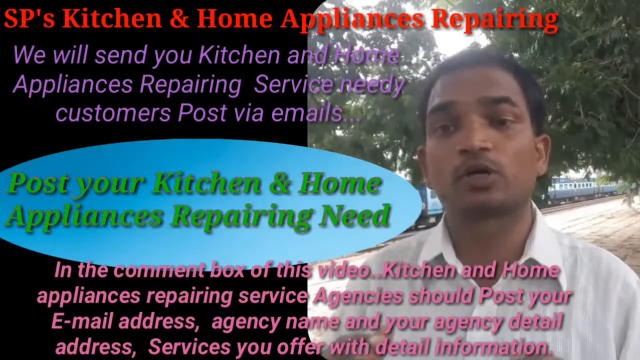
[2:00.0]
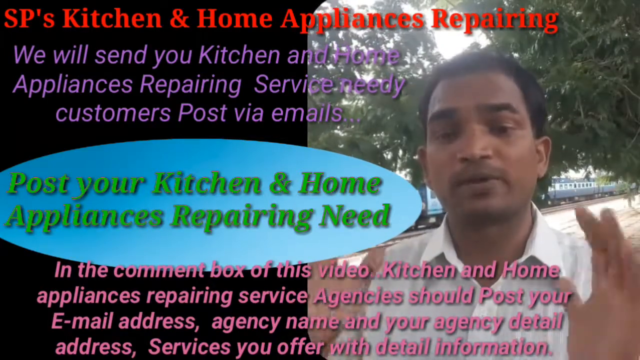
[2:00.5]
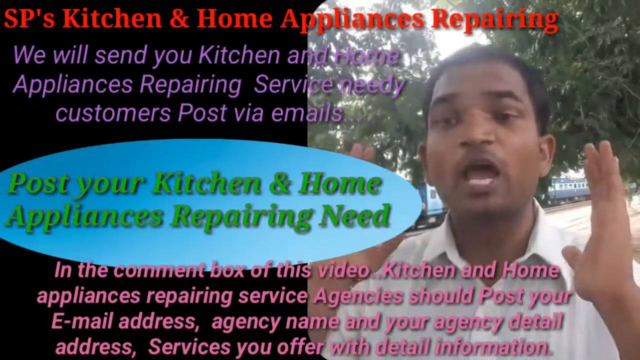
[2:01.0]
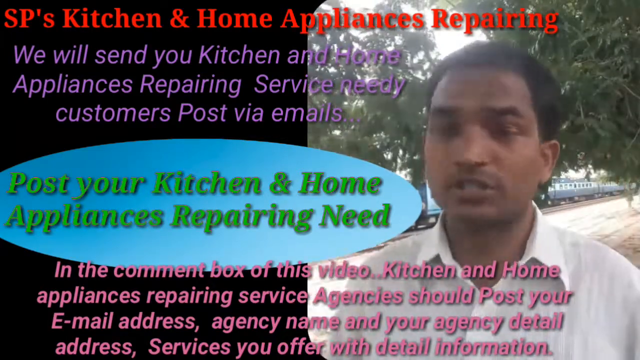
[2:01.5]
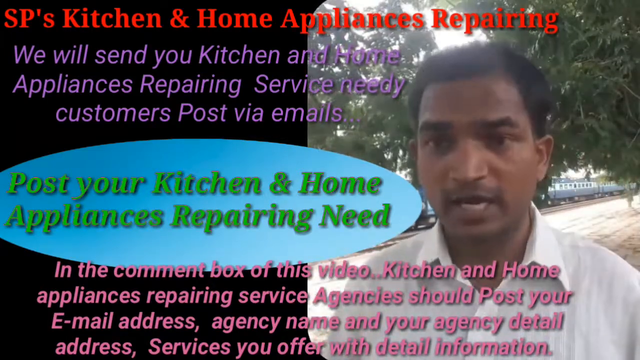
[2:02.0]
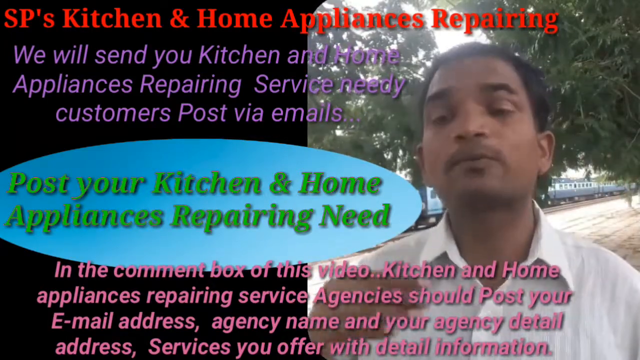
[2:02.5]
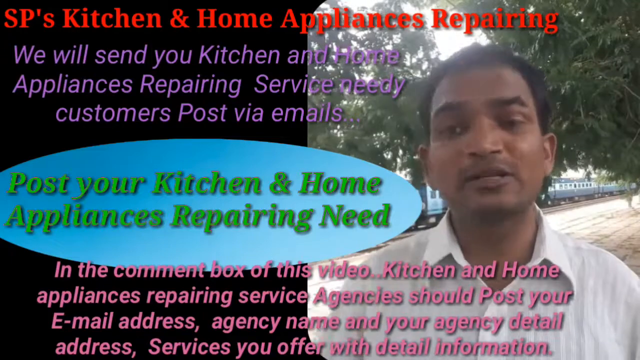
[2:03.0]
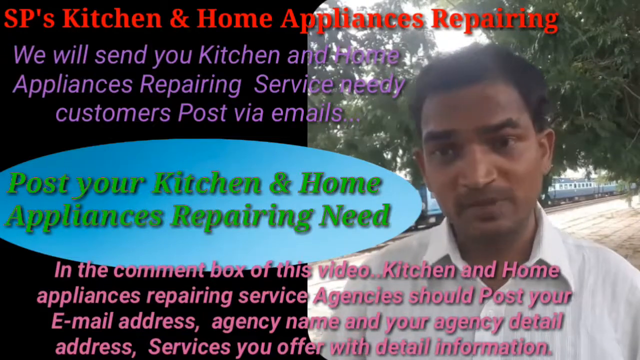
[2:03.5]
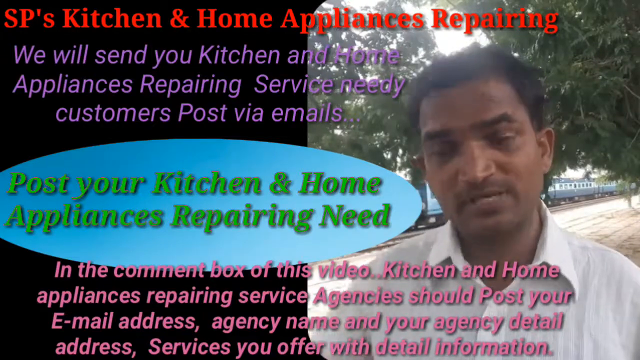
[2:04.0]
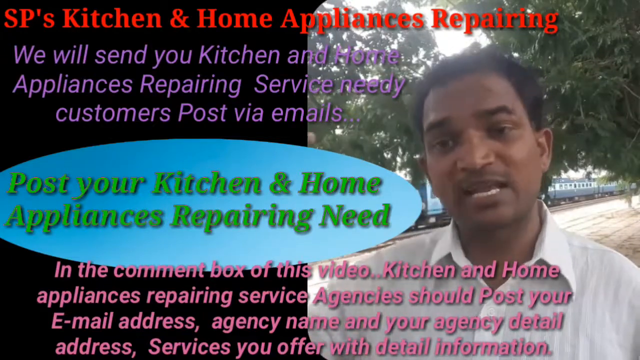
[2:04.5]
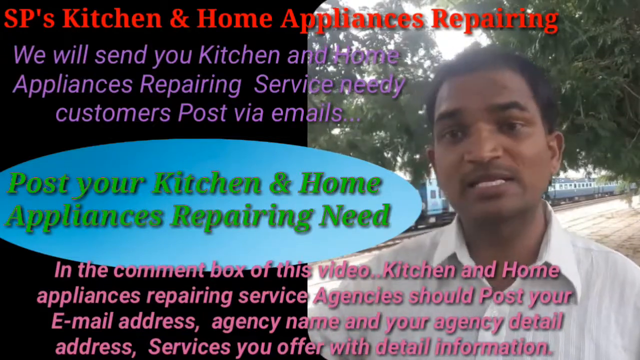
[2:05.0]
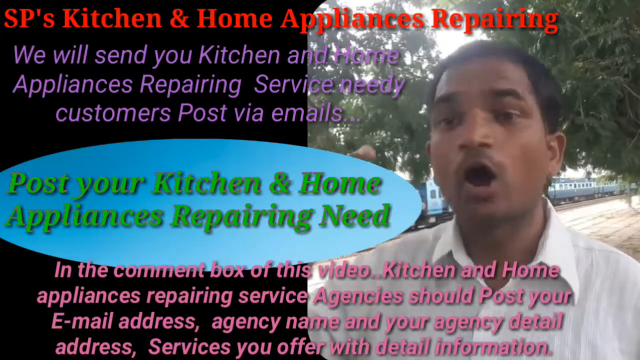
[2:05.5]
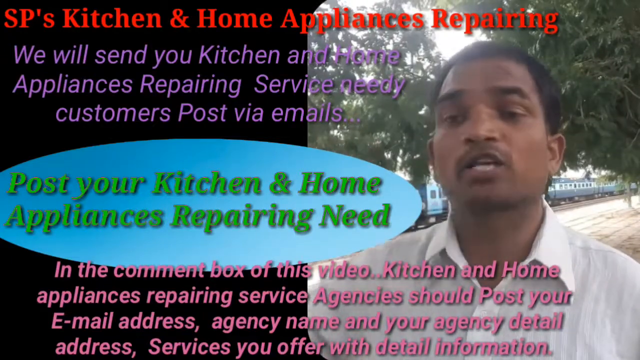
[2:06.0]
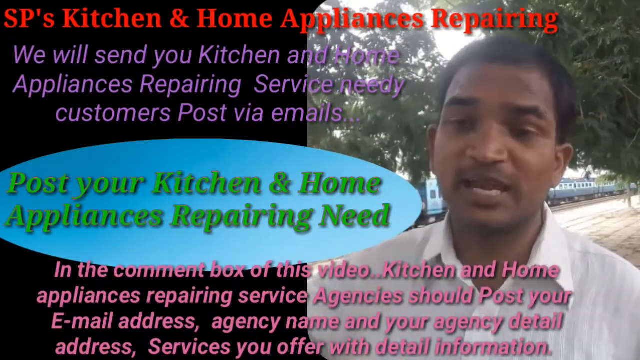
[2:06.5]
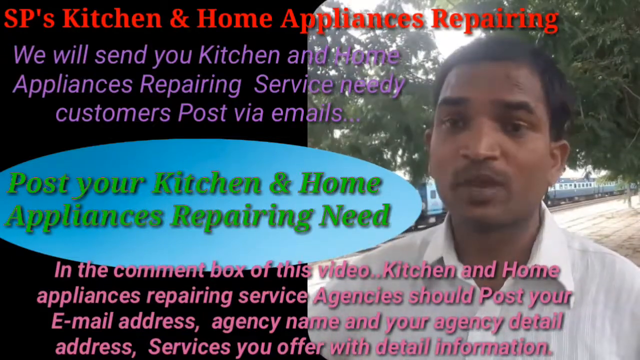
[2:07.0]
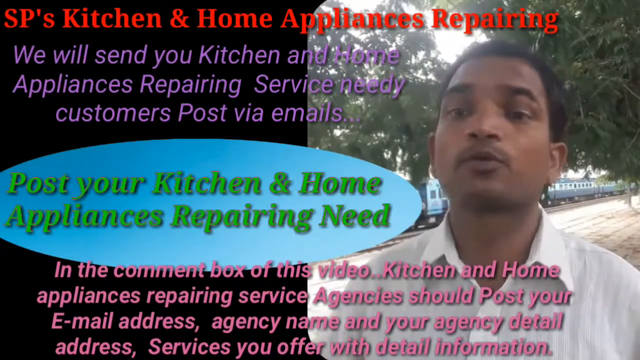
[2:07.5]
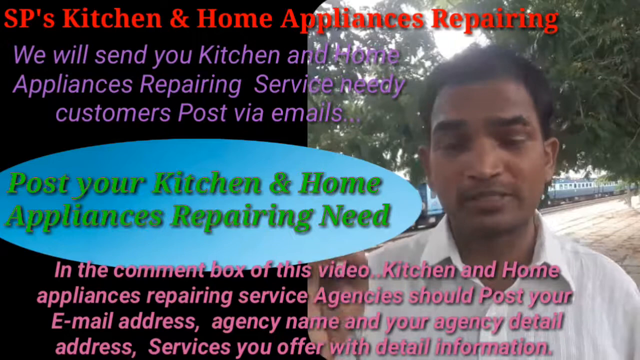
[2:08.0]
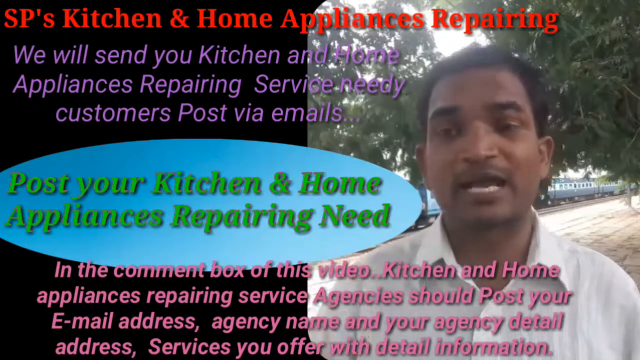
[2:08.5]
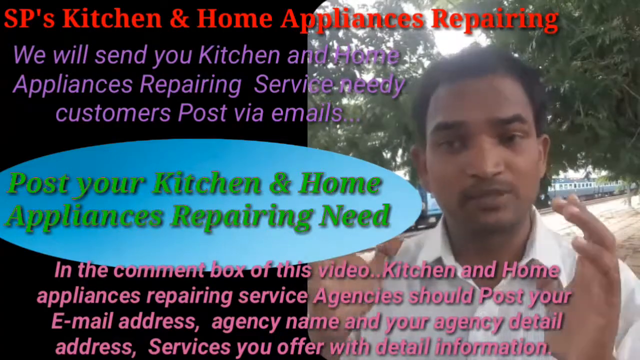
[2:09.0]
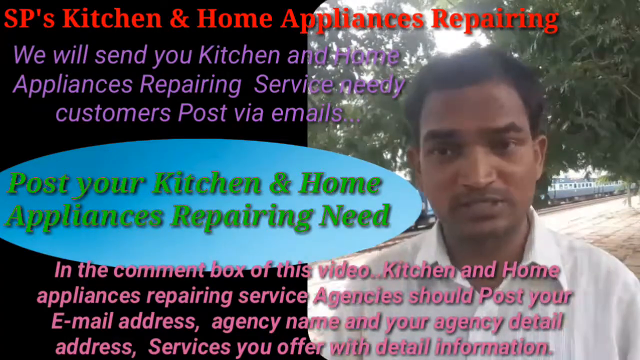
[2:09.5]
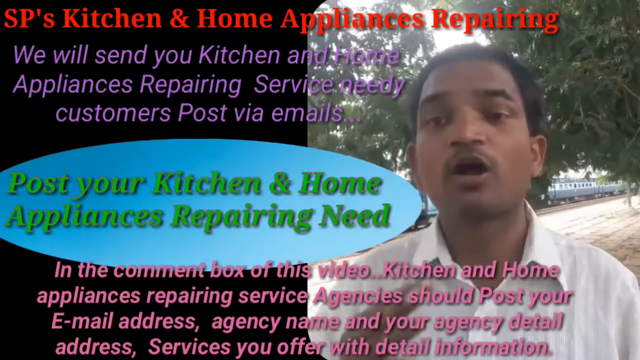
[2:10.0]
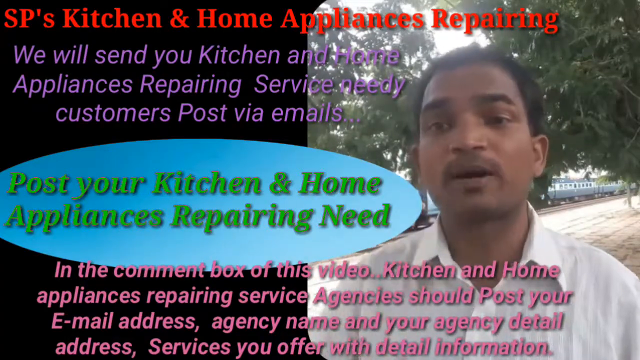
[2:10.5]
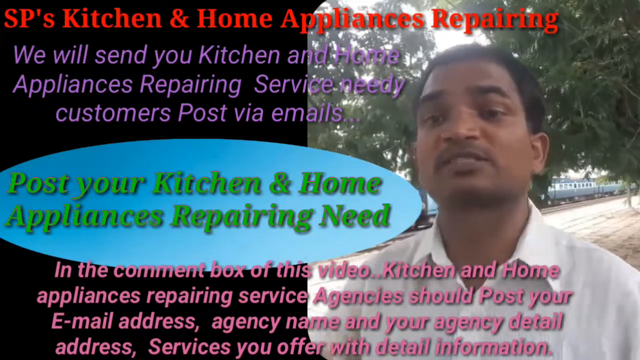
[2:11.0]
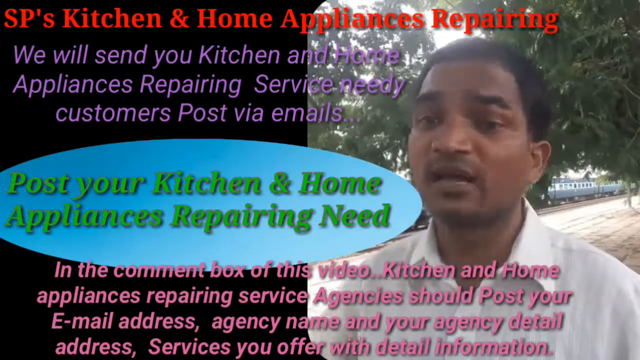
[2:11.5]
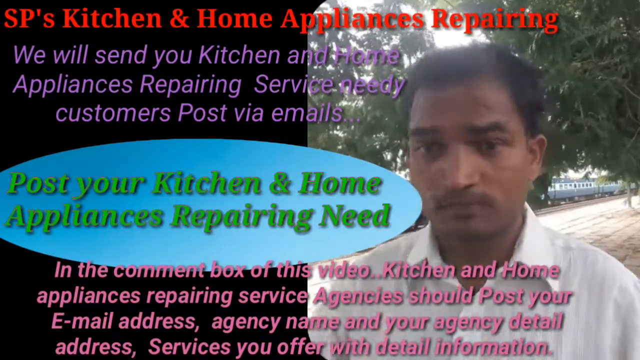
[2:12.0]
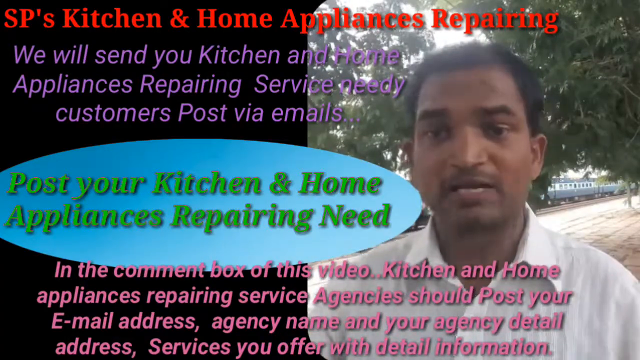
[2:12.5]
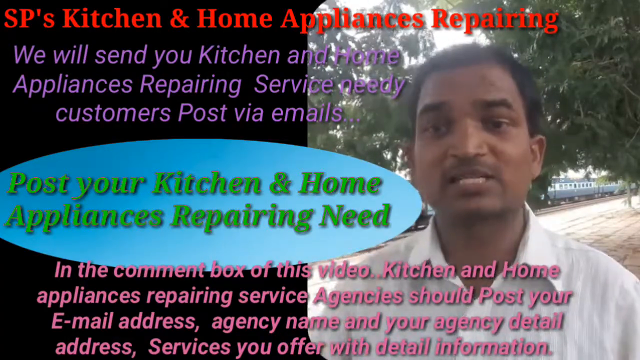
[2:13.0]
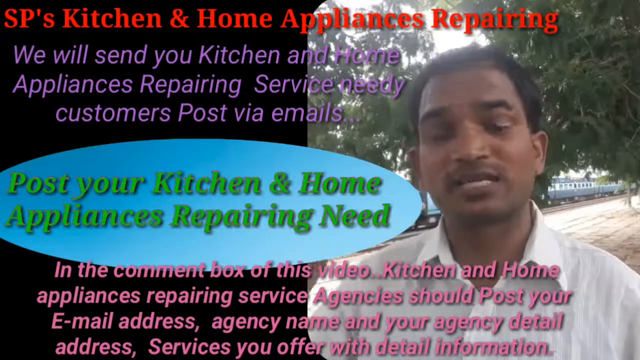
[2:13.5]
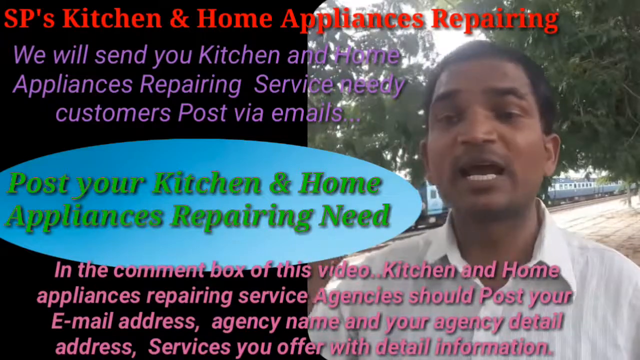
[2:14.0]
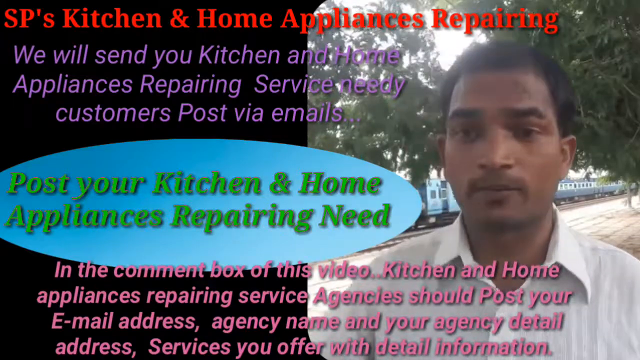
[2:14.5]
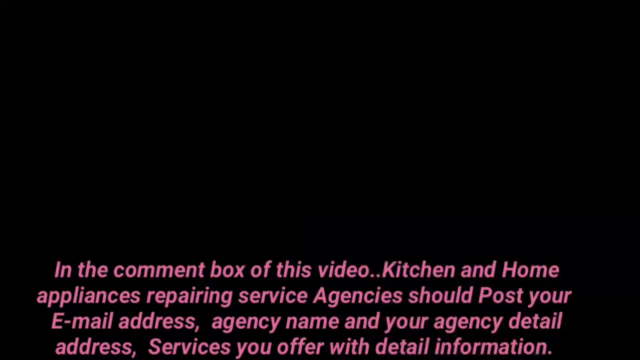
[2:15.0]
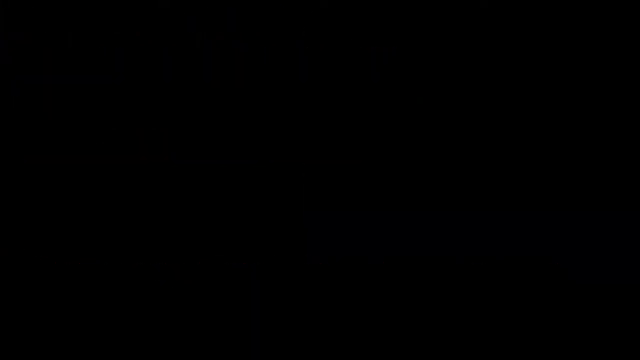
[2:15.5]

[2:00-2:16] The man talks to the camera outside, with writing on a black background on screen. It reads "SP's kitchen home appliances repairing," "we will send your kitchen and home appliances repairing service needy customers post via emails," "post your kitchen home appliances repairing need," and "in the comment box of this video kitchen and home appliances repairing service agency should post your email address username and your agent detail address services you offer with detail information," which reads as somewhat broken English. Behind him there appears to be something like a train, as if he is by a train track. He remains outside, speaking to the camera.